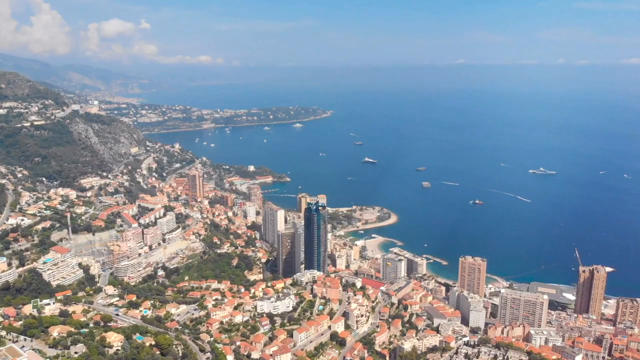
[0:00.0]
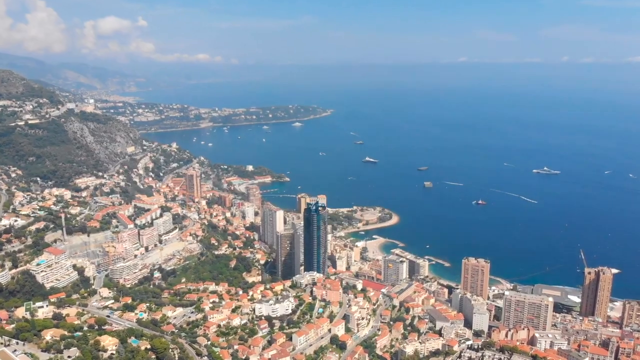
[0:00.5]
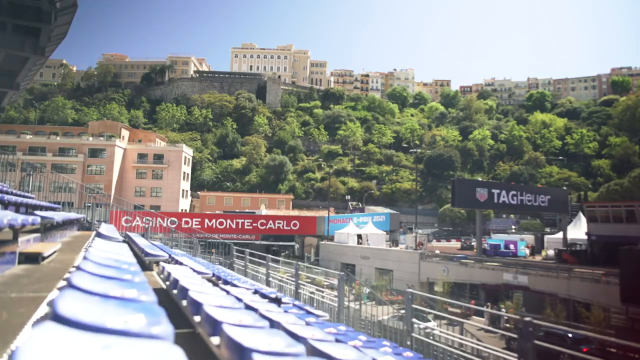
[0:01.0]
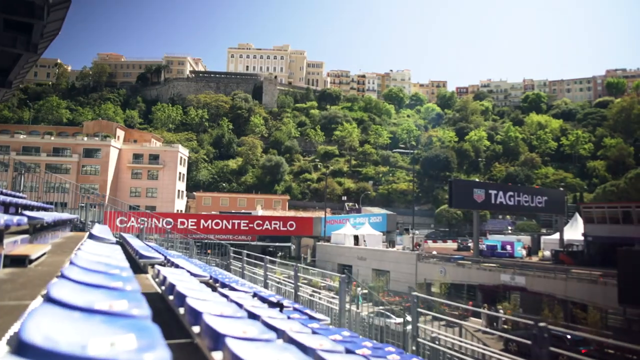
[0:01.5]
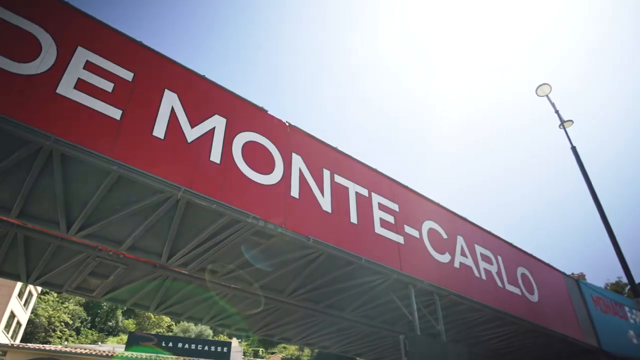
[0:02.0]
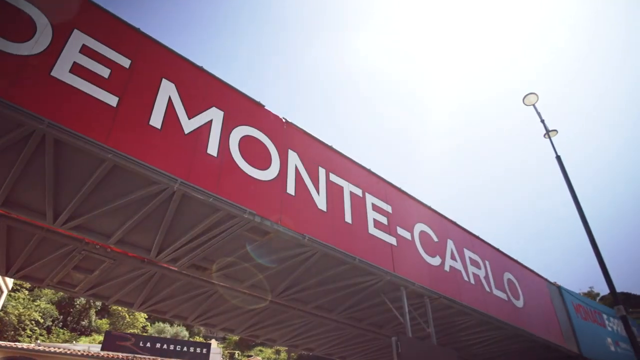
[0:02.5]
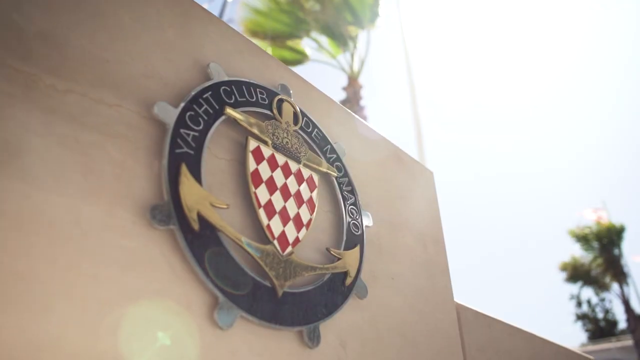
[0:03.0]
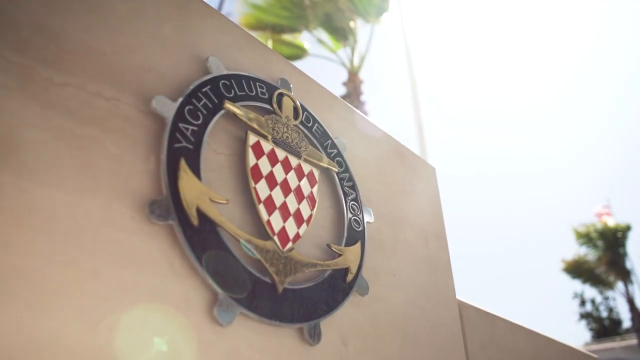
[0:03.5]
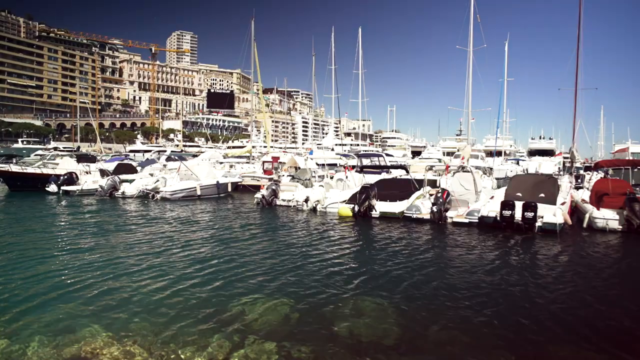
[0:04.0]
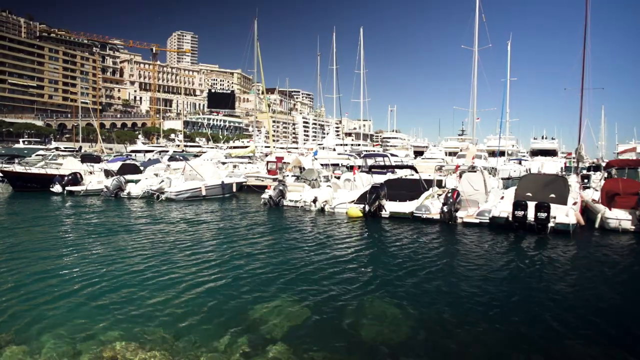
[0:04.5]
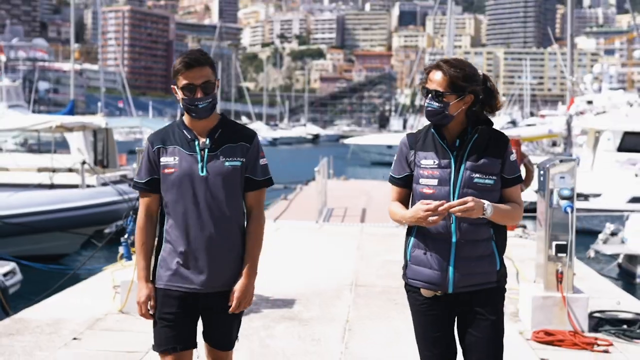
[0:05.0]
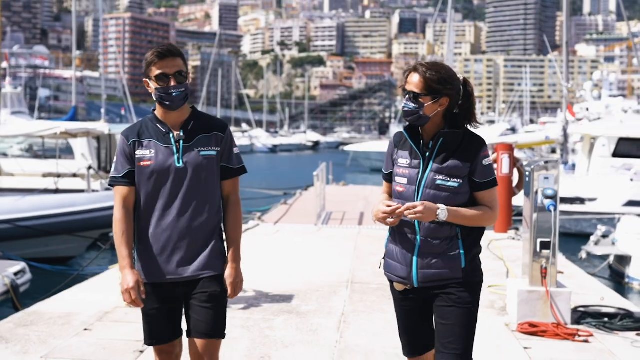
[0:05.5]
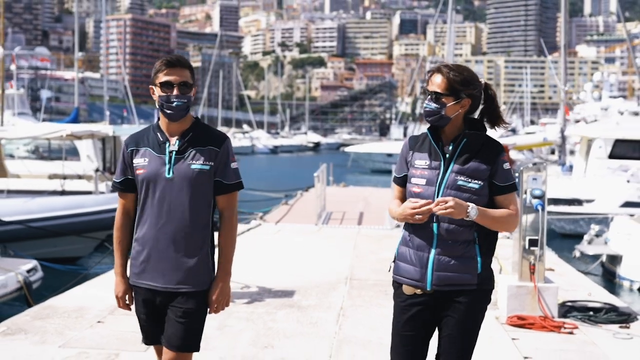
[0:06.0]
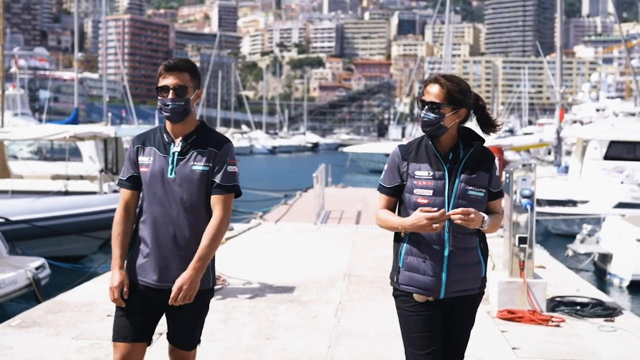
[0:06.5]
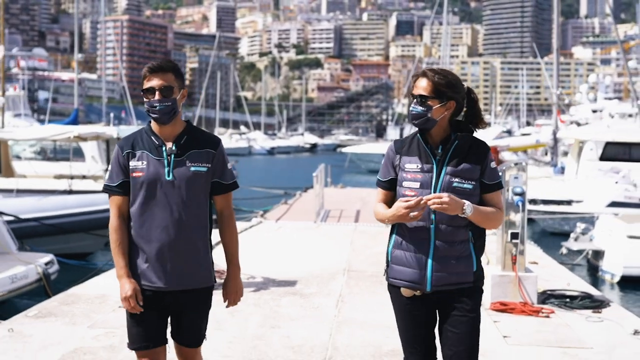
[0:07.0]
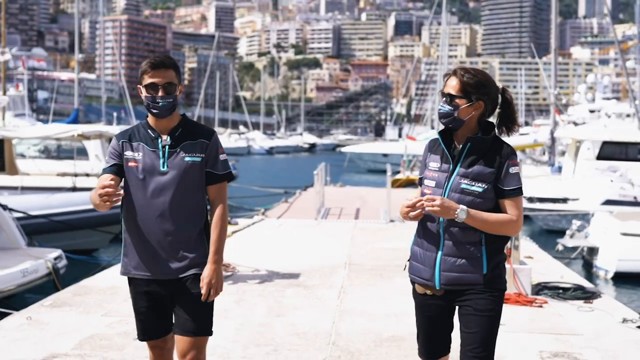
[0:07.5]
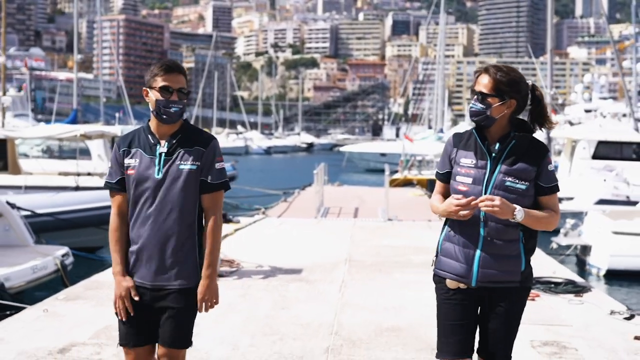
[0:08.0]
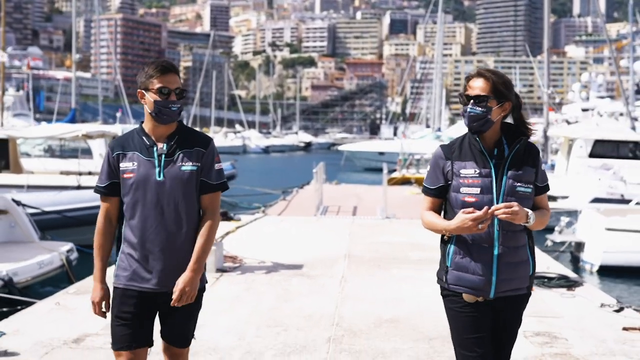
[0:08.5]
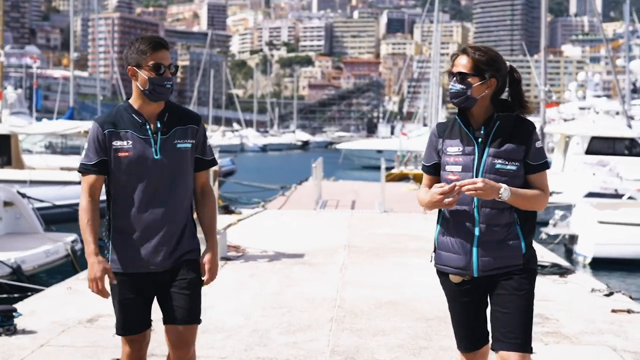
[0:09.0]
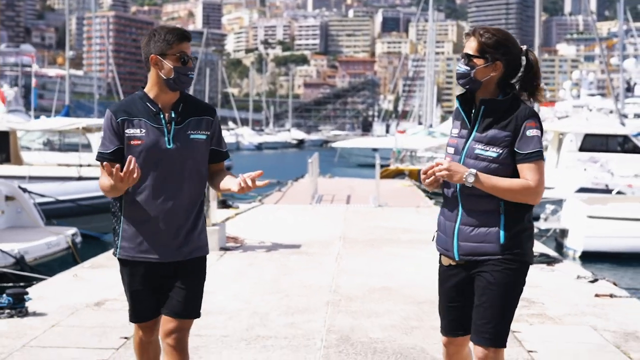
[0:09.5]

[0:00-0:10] Two people, a woman and a man, both wearing masks, talk to each other. The skyline of the area of the Casino Monte Carlo appears, along with several bodies of water holding many different yachts. It looks like very warm weather outside, and it is very bright.